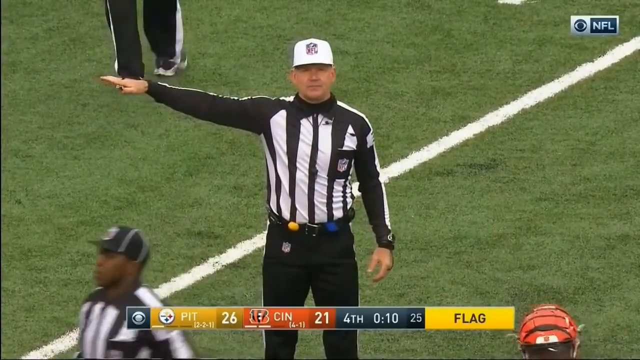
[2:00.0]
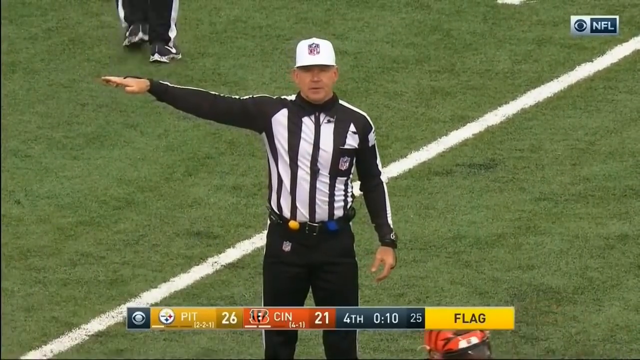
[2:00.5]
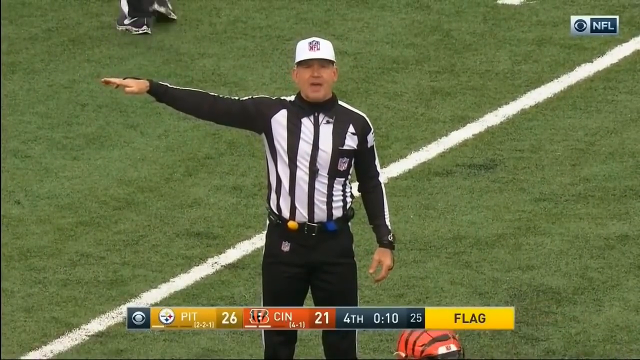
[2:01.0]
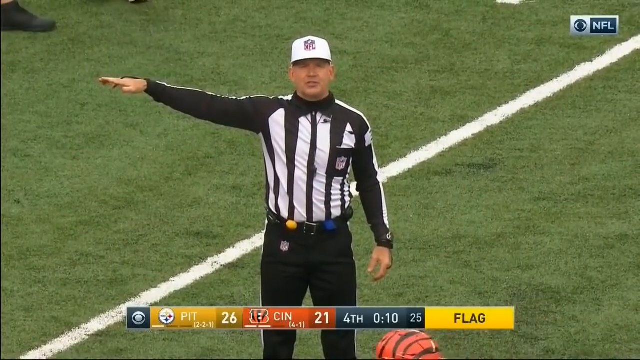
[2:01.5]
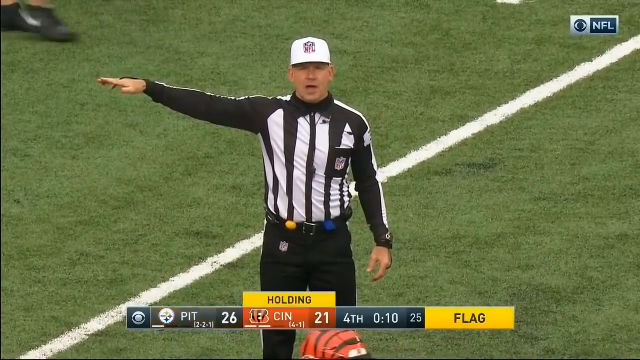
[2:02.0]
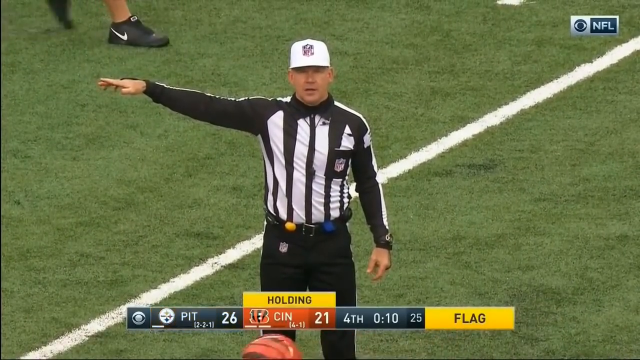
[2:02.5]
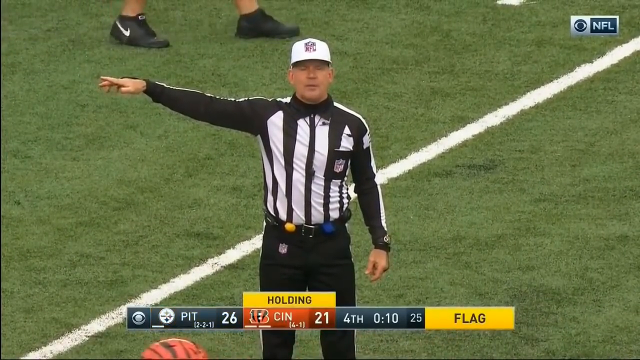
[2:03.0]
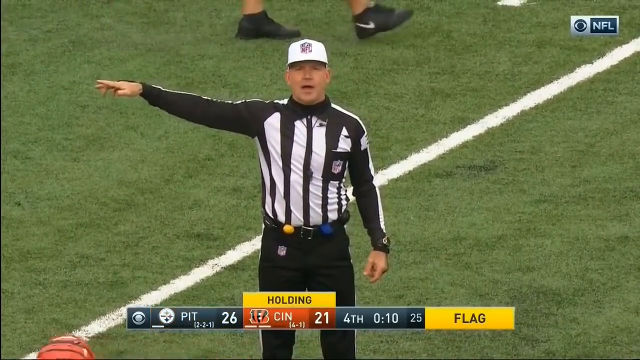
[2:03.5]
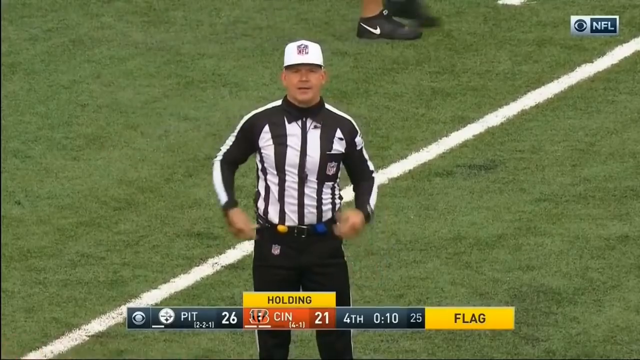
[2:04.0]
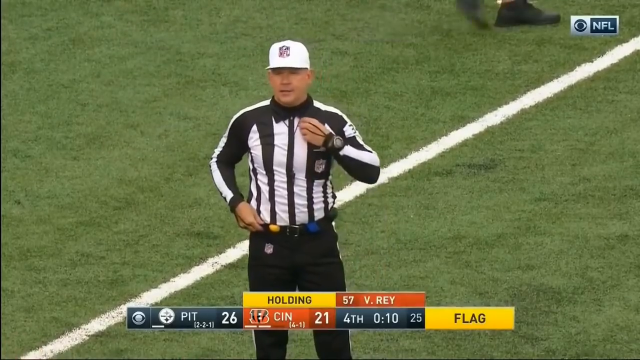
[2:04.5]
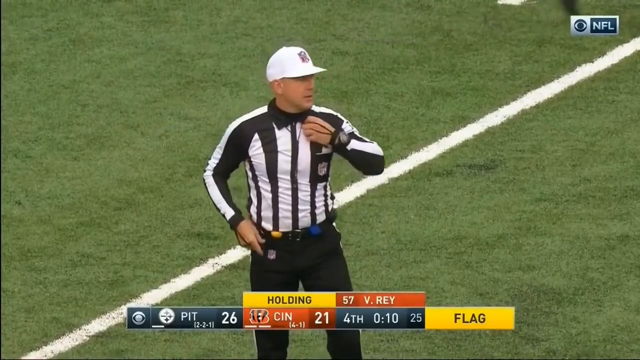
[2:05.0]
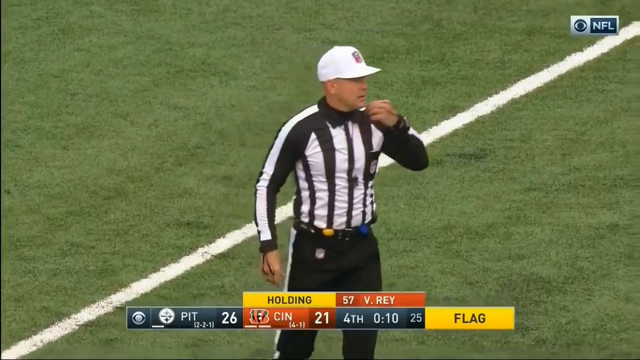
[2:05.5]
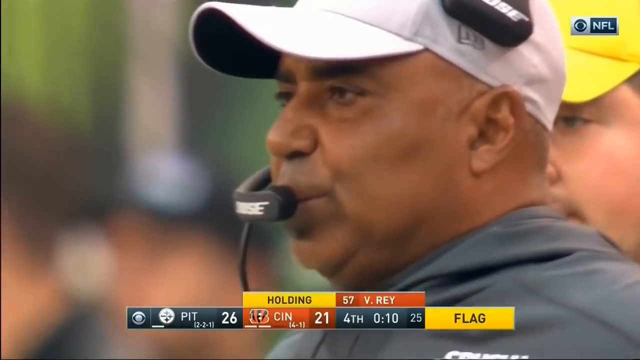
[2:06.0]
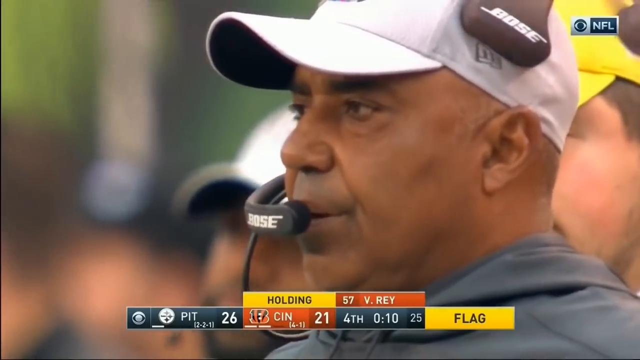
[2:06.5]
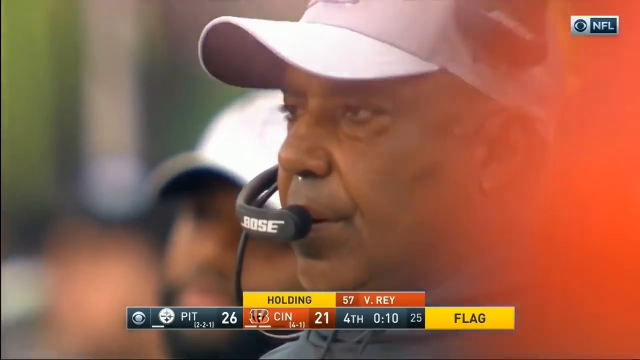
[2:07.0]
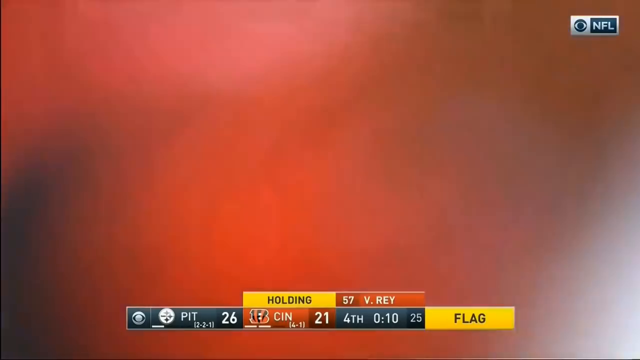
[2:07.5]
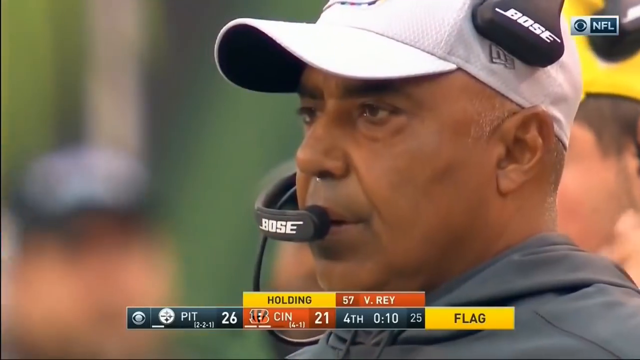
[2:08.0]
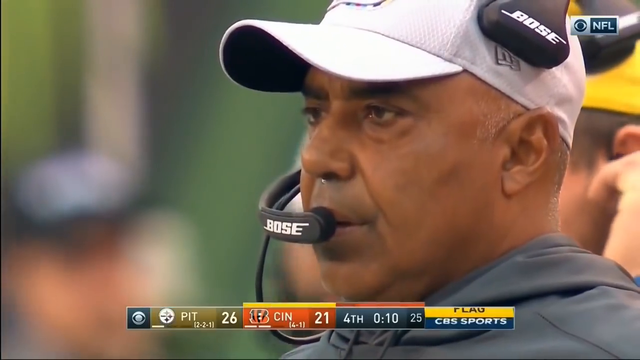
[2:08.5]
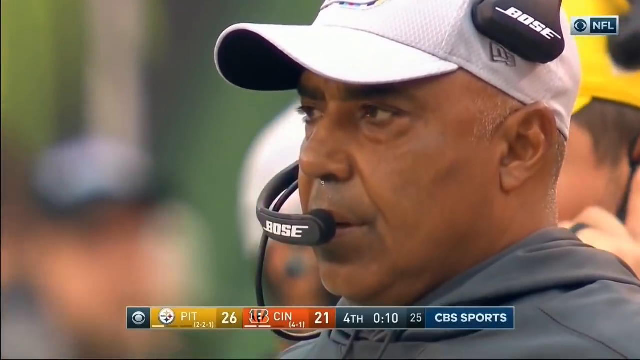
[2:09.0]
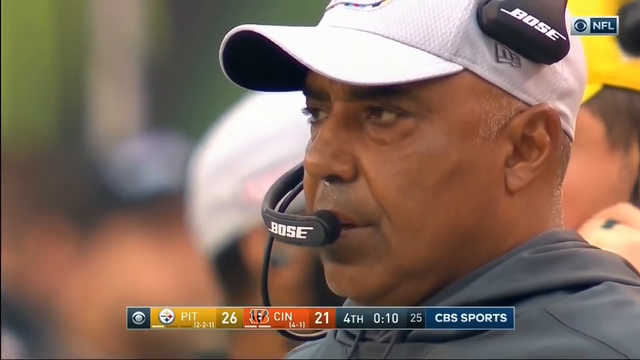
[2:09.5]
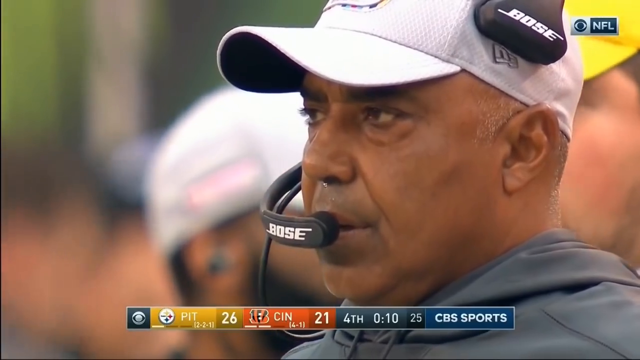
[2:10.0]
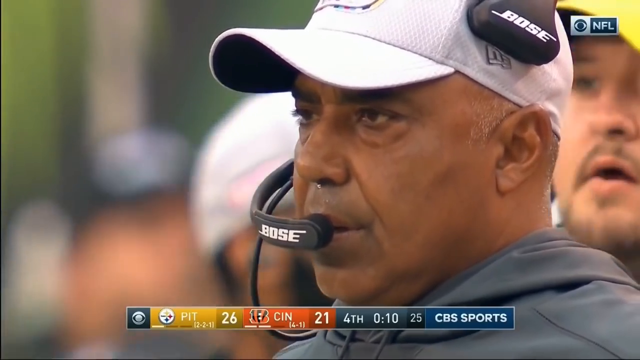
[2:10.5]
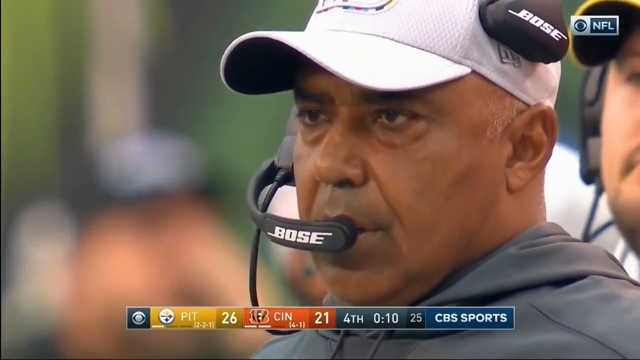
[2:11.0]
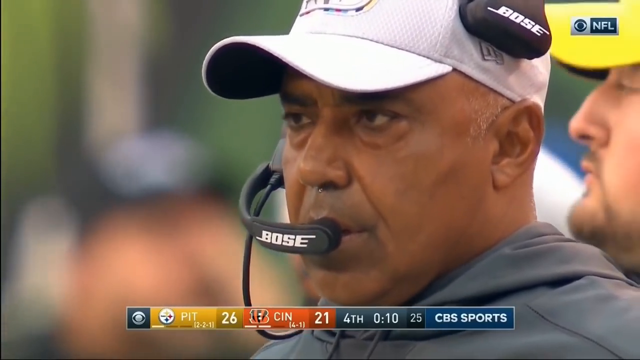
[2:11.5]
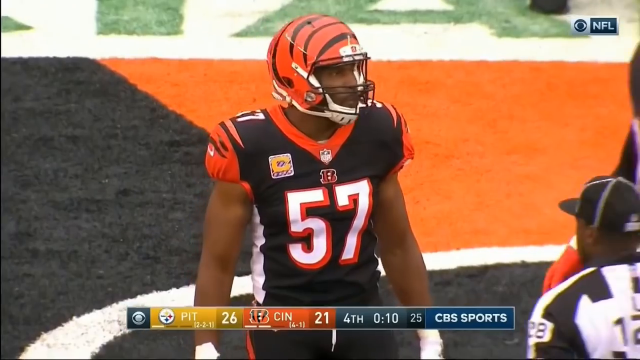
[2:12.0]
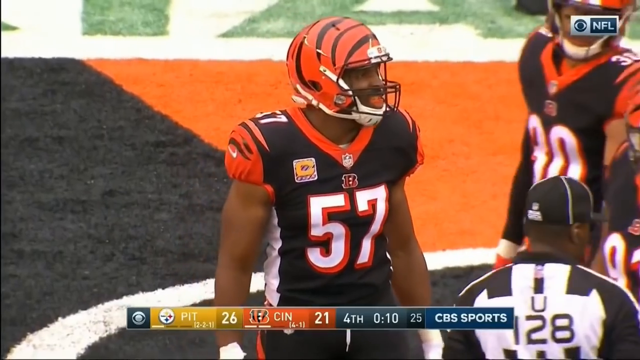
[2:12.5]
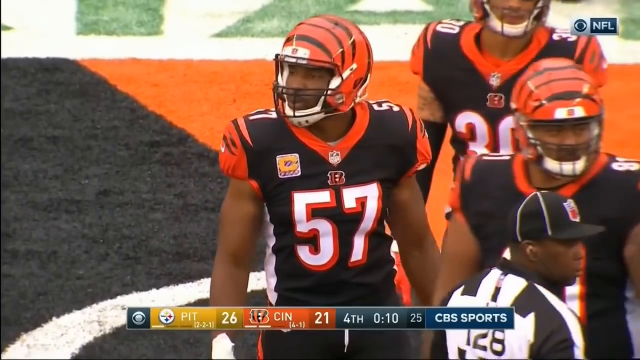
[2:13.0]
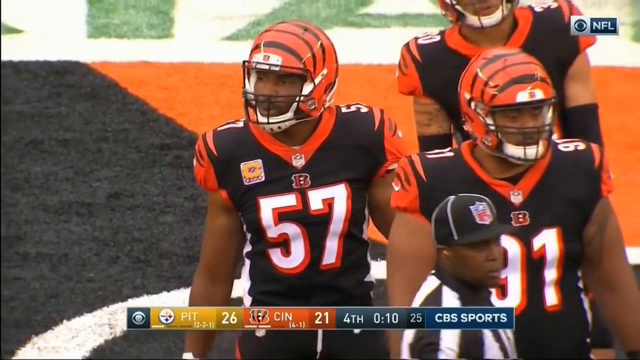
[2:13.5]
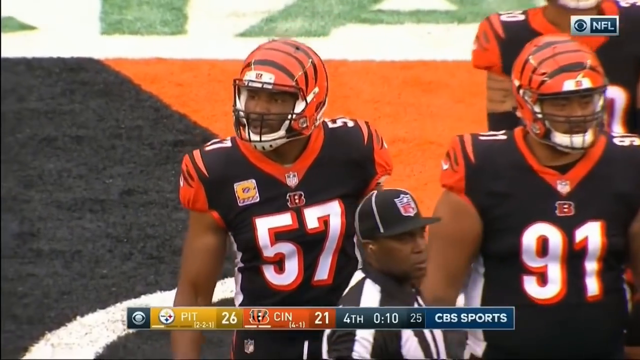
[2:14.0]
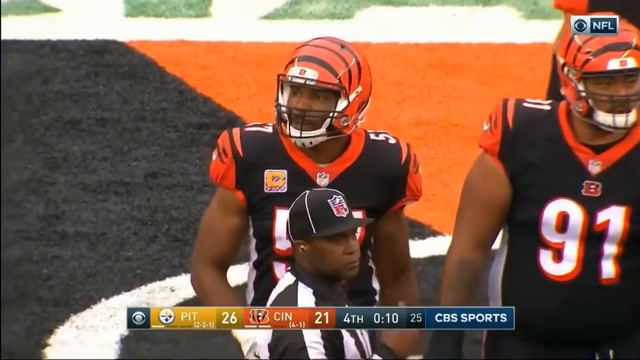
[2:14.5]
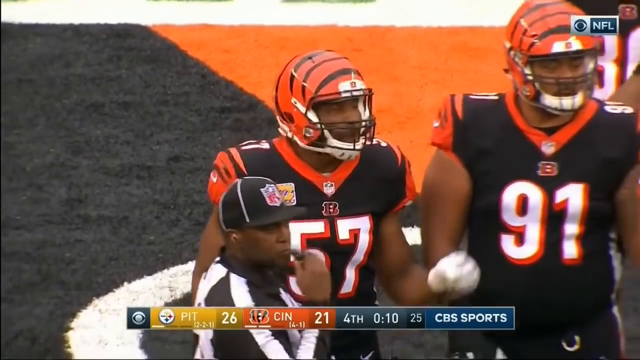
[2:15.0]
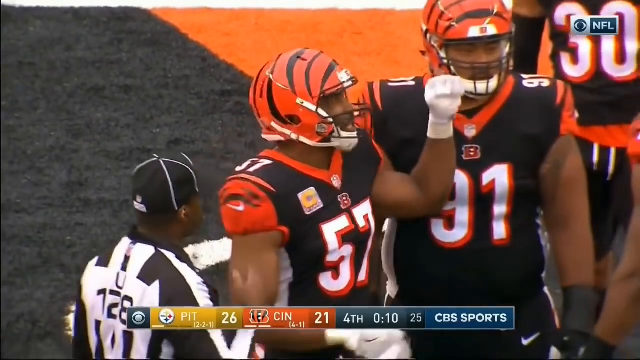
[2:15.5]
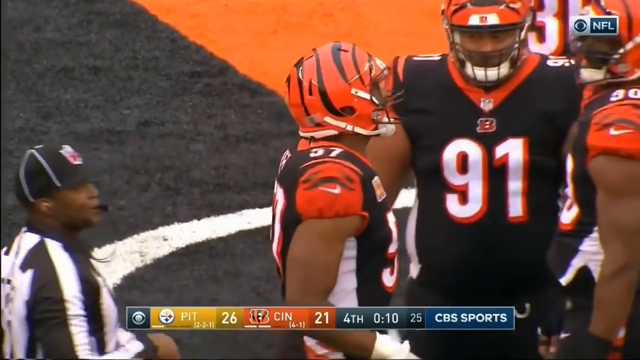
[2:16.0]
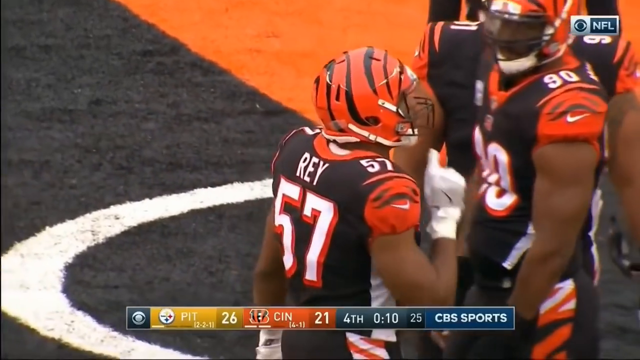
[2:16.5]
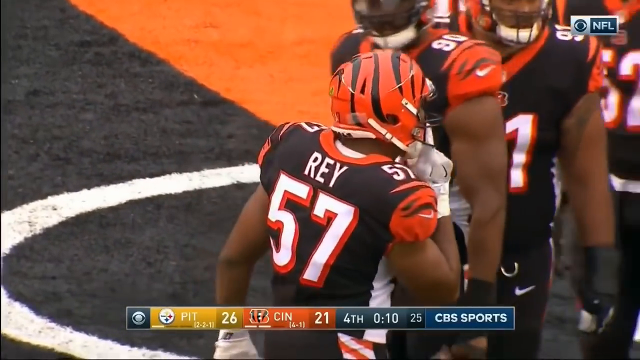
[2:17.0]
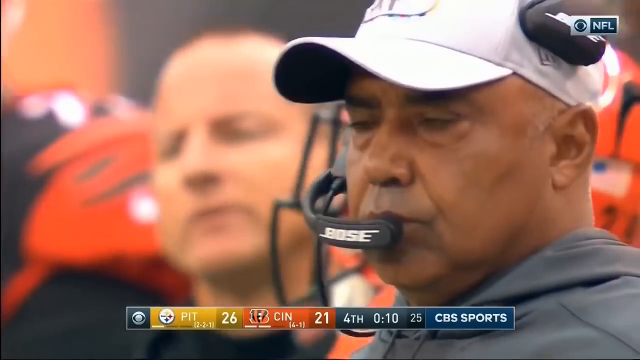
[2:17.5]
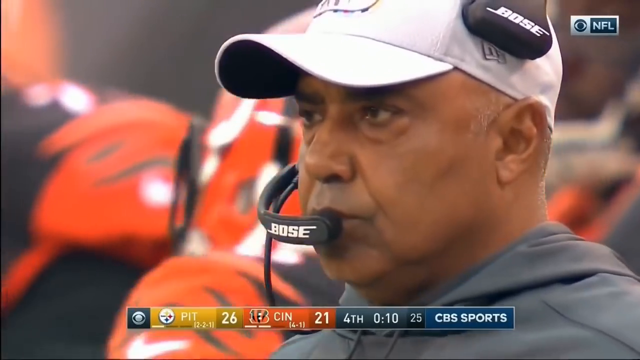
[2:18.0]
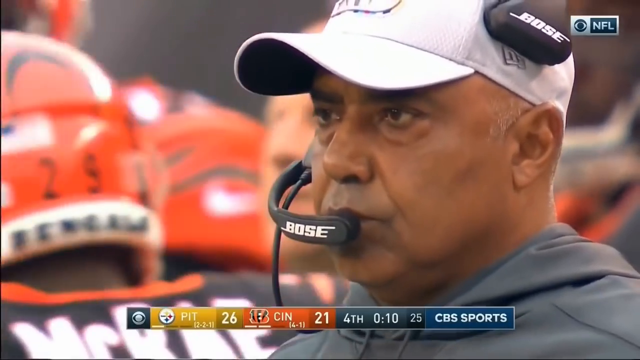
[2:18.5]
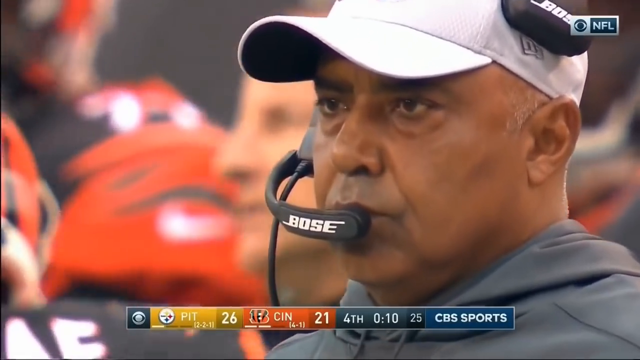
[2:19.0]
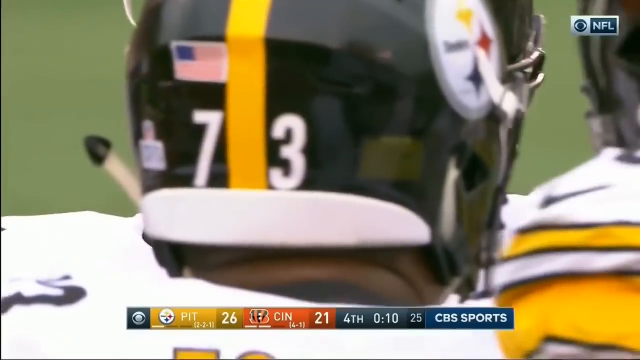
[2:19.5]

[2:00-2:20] A referee stands looking directly at the camera with his left arm down at his side and his right arm held straight out to the side at shoulder height; his mouth moves and he appears to be speaking. A yellow rectangle at the bottom says "holding", and the number 57 appears, likely the player charged with the penalty. A close-up shows a coach on the sideline wearing a white baseball cap, a gray hoodie and a headset with the word "bows" on the side. Behind him a few other faces are out of focus, including a man with a white or yellow baseball cap, a goatee and pale pink skin.